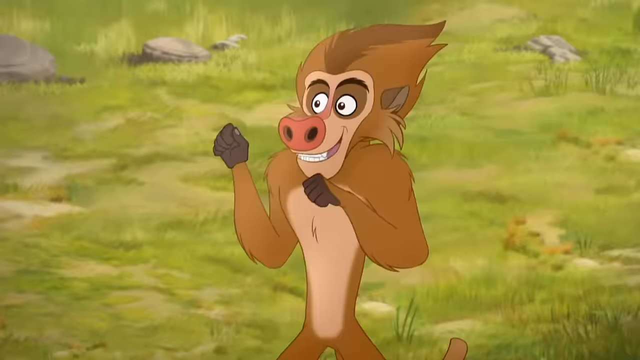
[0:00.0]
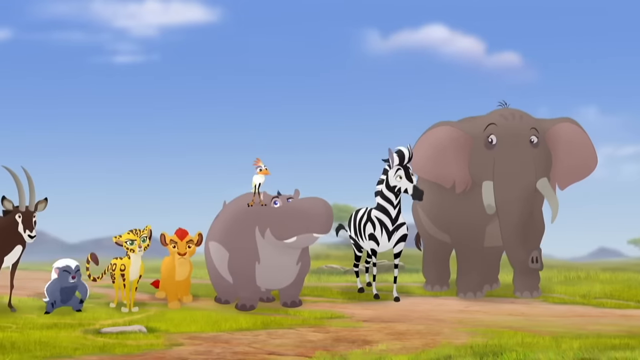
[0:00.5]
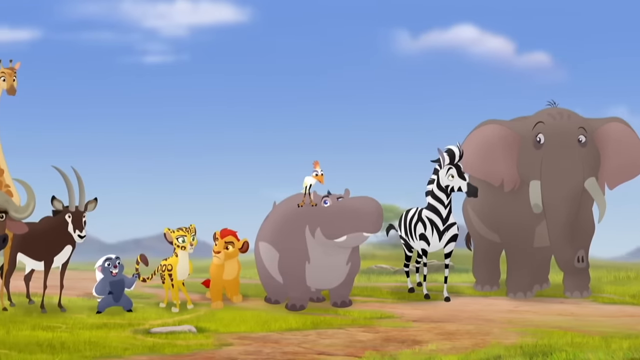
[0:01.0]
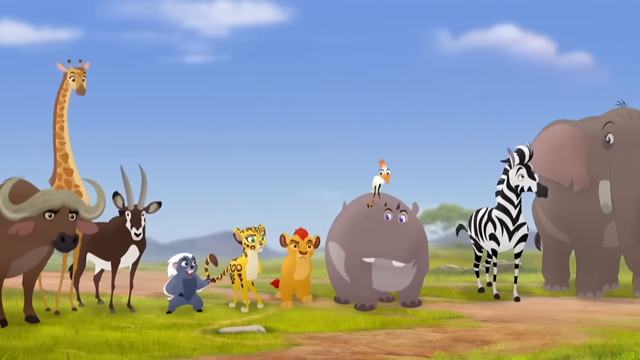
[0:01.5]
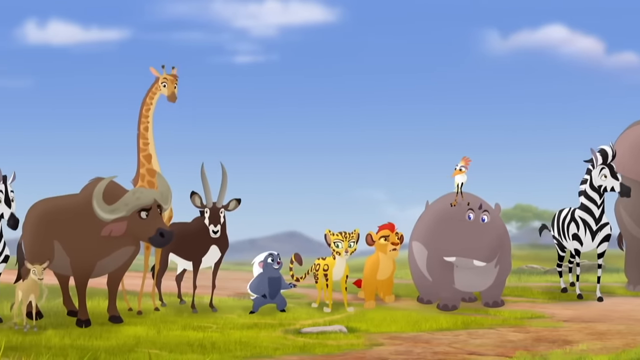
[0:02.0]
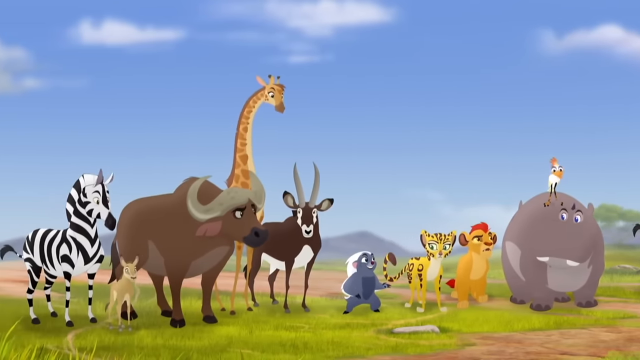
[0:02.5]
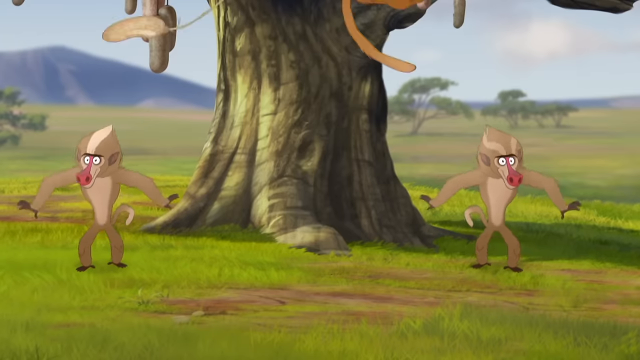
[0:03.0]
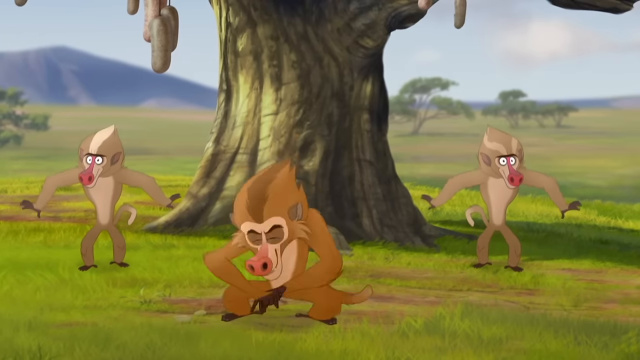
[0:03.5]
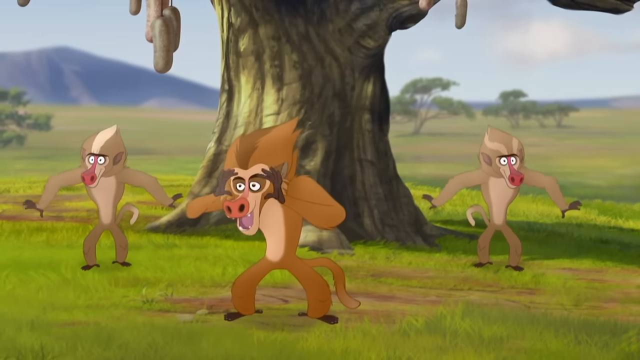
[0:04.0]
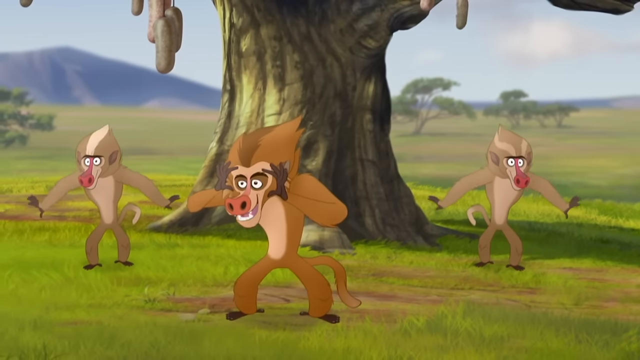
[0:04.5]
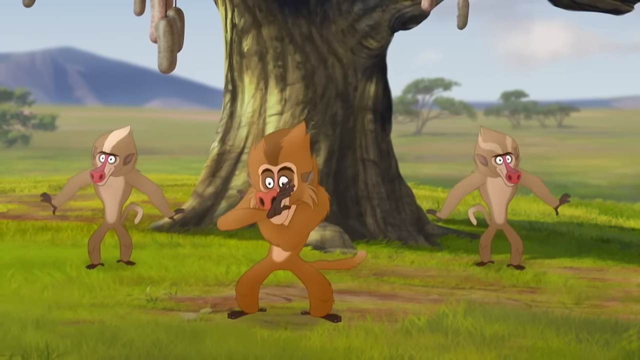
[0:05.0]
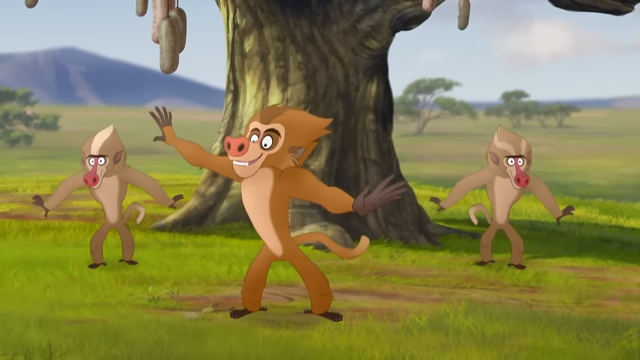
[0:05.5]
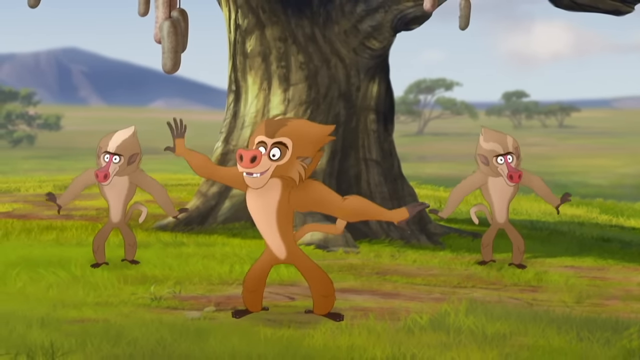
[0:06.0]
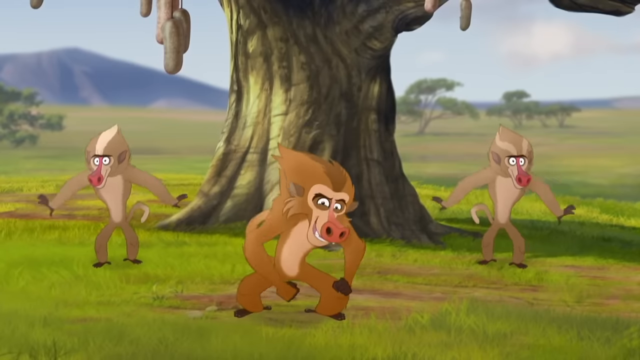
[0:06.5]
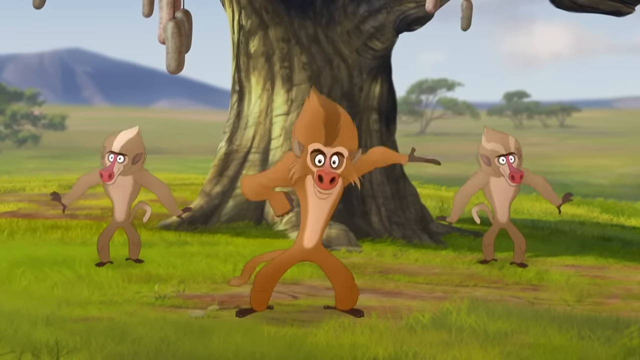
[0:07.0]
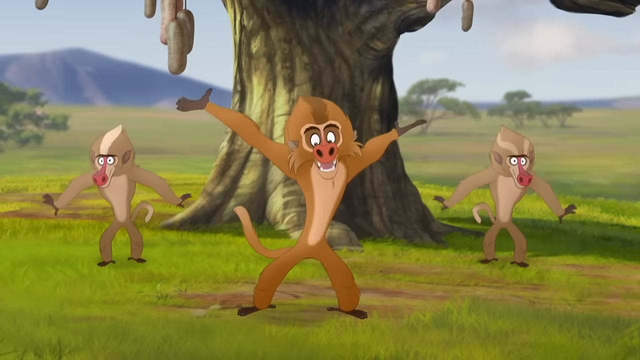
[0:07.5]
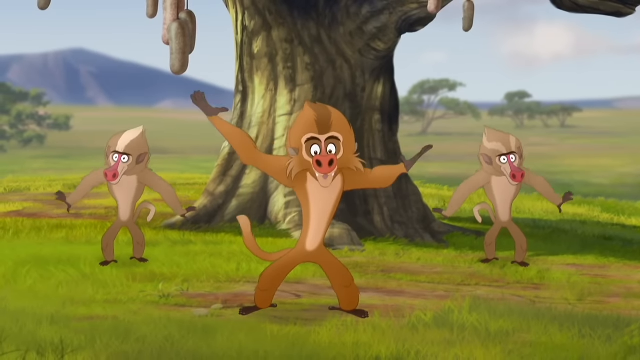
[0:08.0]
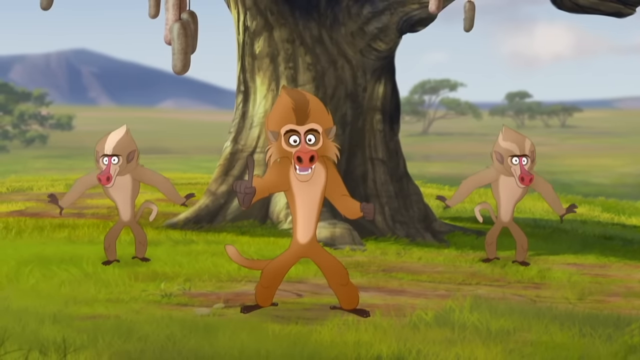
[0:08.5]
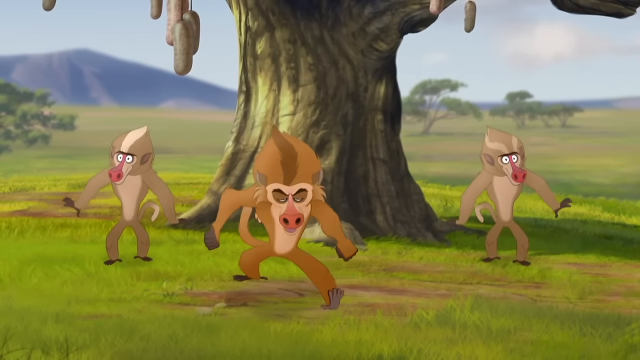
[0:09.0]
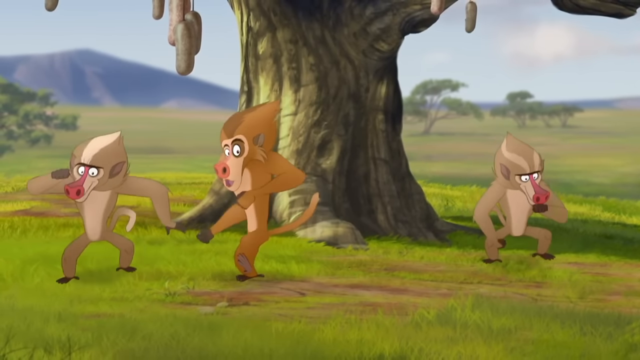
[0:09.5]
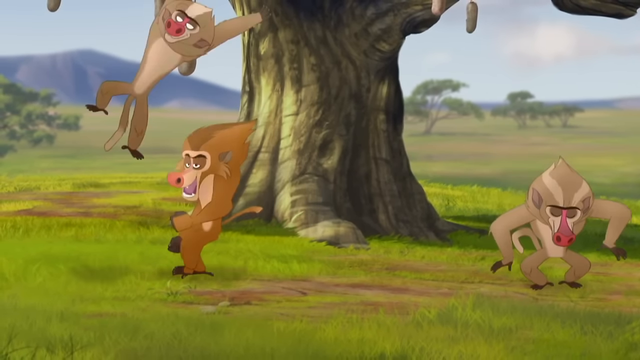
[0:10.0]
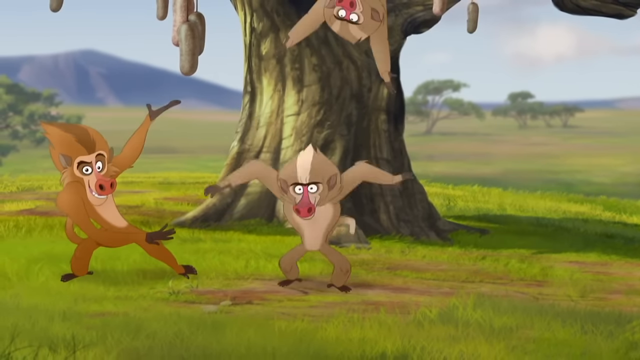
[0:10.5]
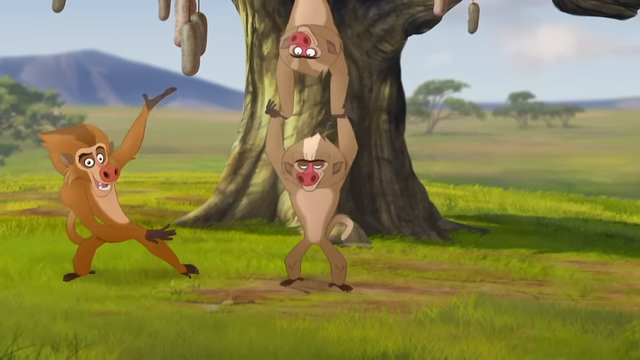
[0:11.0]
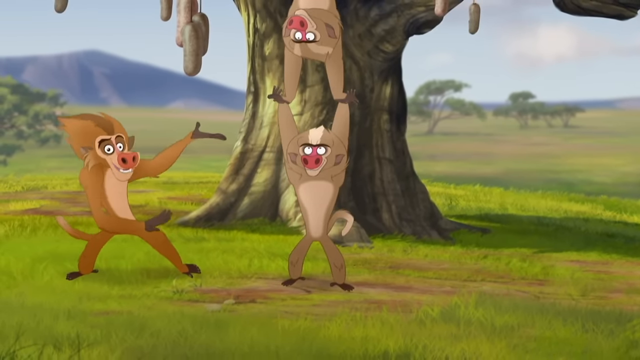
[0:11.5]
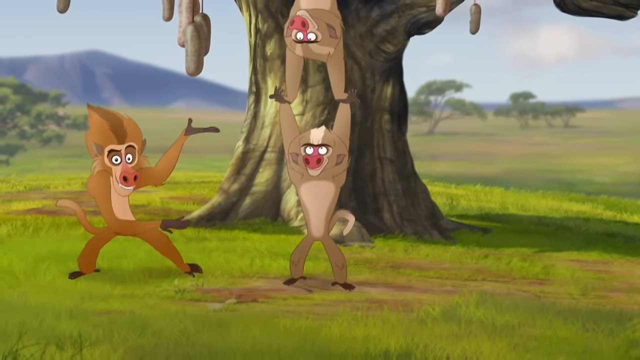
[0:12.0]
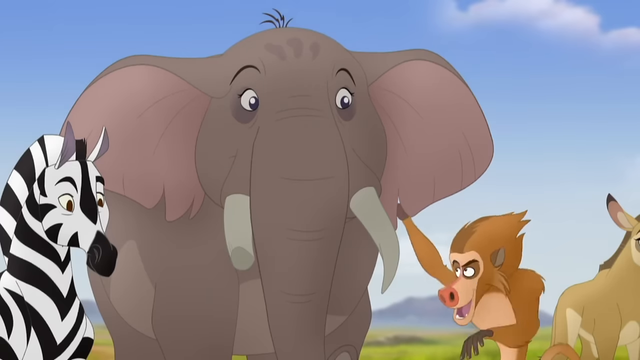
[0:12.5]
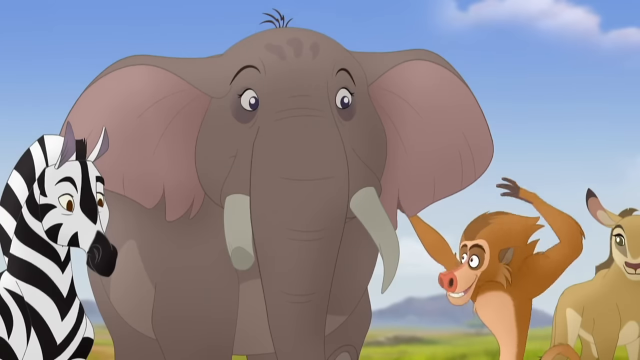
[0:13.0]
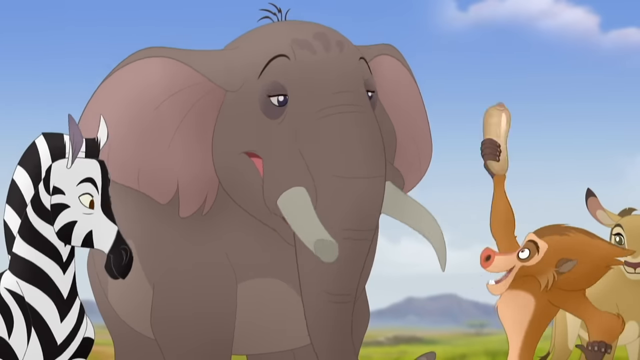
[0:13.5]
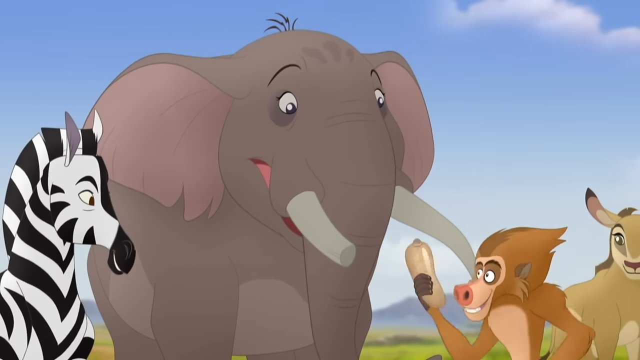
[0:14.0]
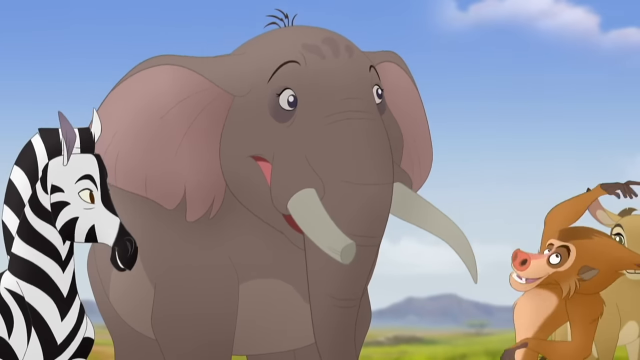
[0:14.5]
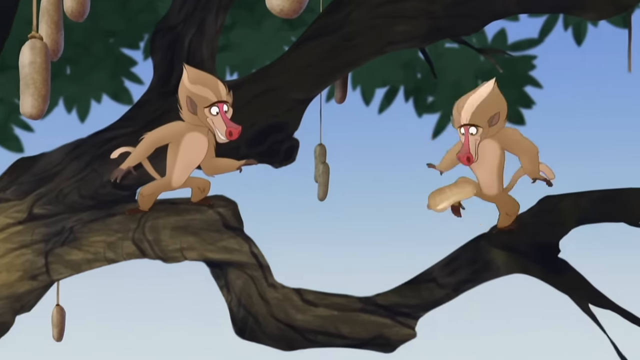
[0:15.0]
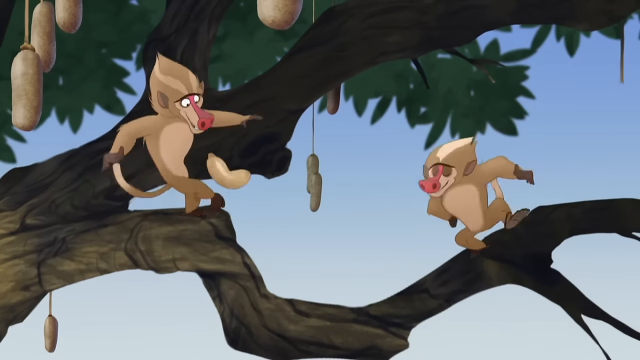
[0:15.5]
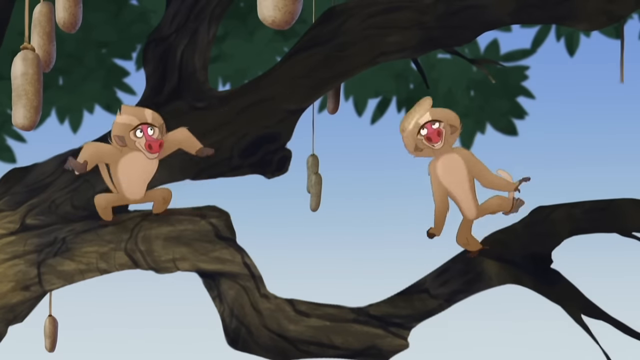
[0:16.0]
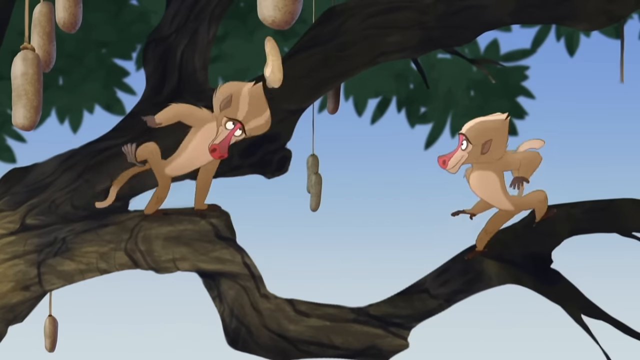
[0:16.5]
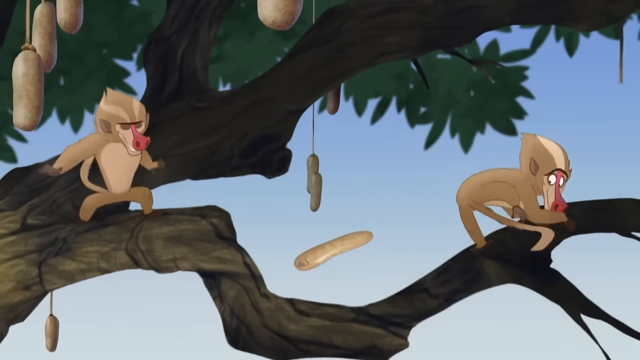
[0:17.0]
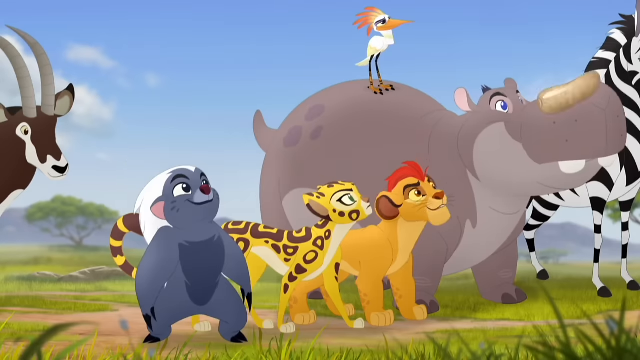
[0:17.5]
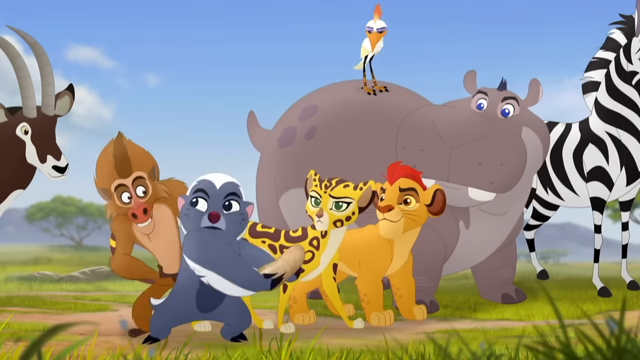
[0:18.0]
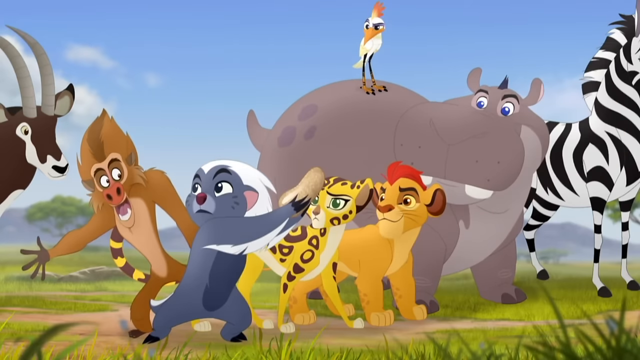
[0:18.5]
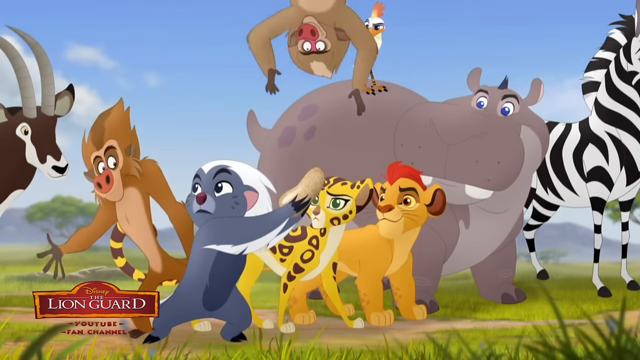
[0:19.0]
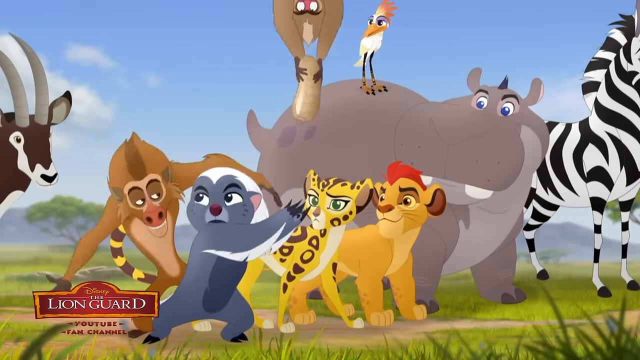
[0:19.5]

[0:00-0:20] The video is a cartoon, apparently from a series based on The Lion King. It opens on the safari with blue skies, grass and some trees, and a line of animals: an elephant, a zebra, a hippopotamus with a bird sitting on its back, little Simba, something like a cheetah, what appears to be a skunk next to the cheetah, an antelope, a buffalo, a giraffe, another zebra and several monkeys. The scene cuts to a tree with a different type of monkey, which might be baboons. One is talking while others seem to dance in the background, and then they start flipping and doing gymnastics. The talking one goes up to the elephant and takes something out of its ear, then throws it to the other two monkeys, who kick it back and forth like football players. It is thrown to the skunk, and another monkey grabs it out of his hands. A small logo at the bottom reads "lion guard", apparently a spinoff series of The Lion King. The animation looks cartoonish but computerized, with a CGI feel, and it looks somewhat cheap, like something made in Flash.